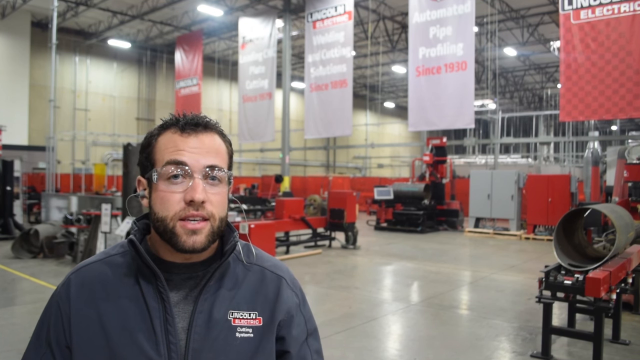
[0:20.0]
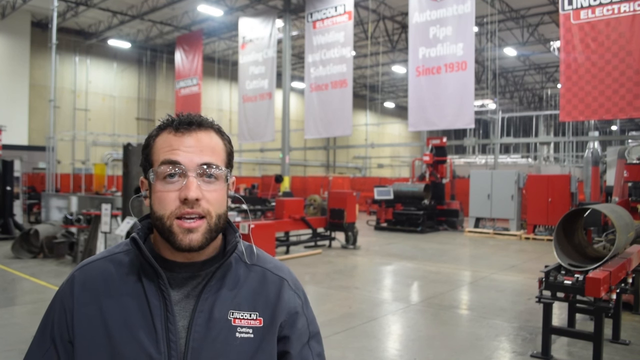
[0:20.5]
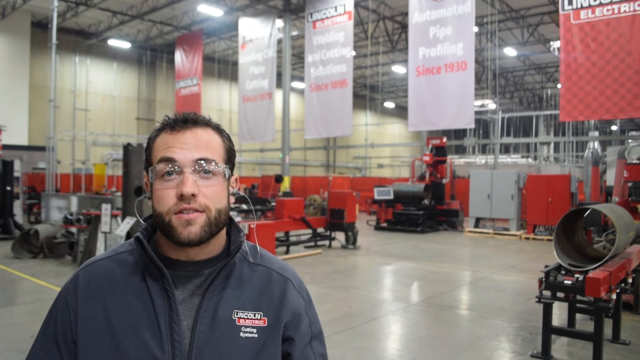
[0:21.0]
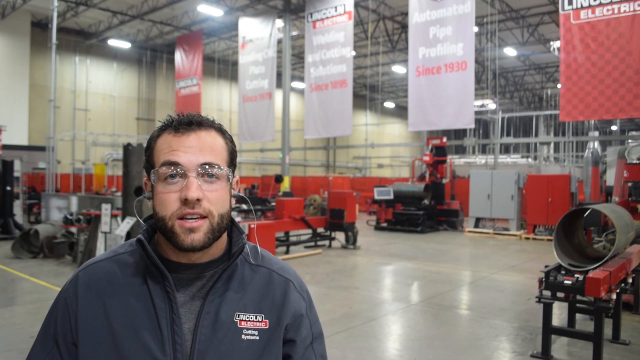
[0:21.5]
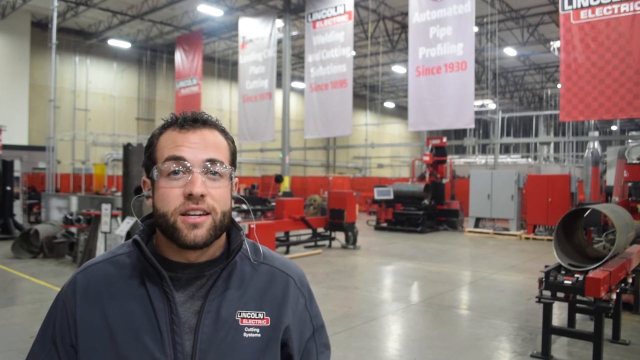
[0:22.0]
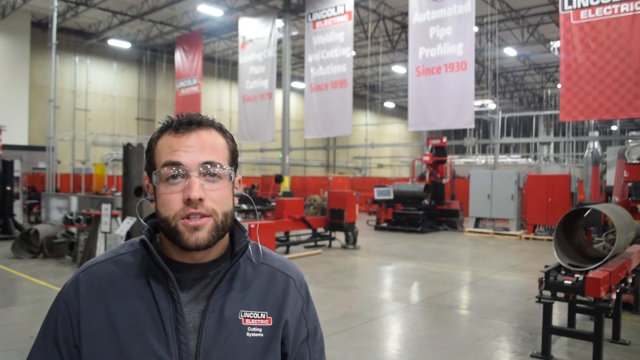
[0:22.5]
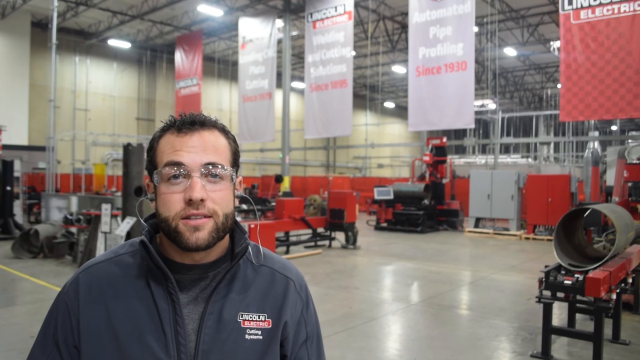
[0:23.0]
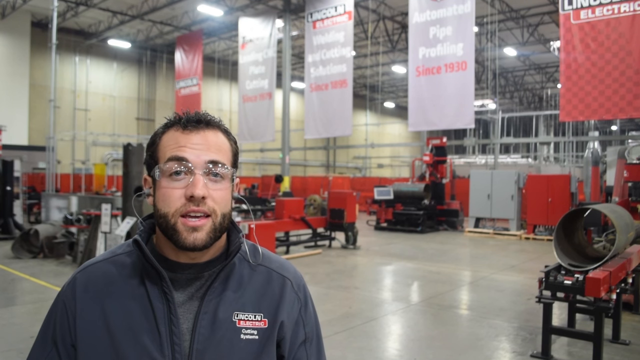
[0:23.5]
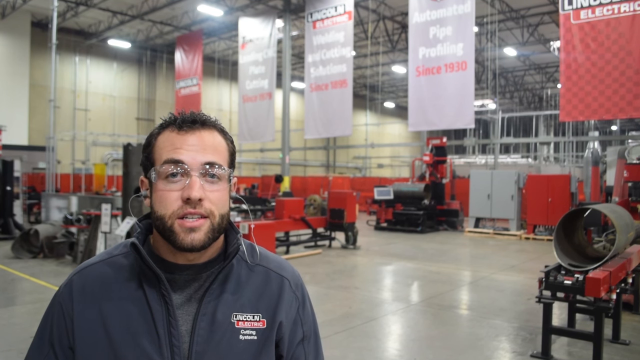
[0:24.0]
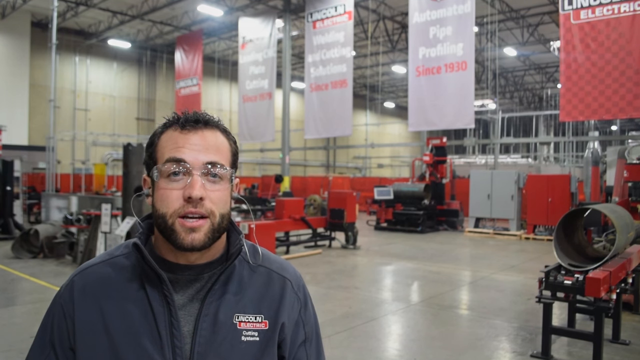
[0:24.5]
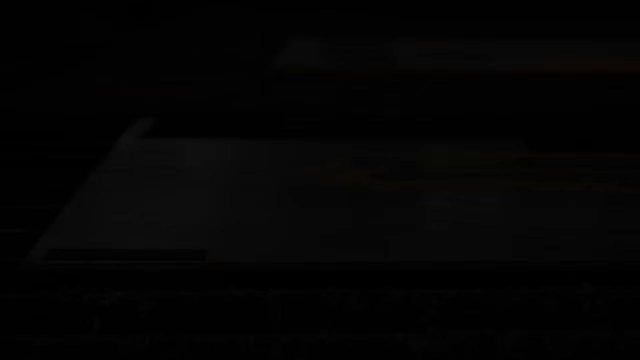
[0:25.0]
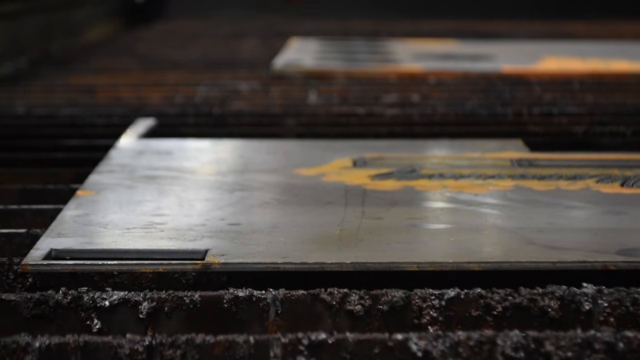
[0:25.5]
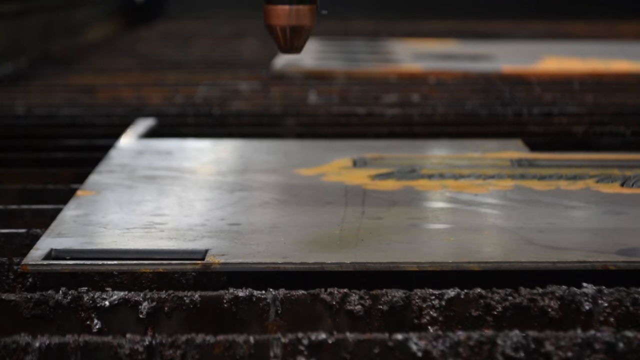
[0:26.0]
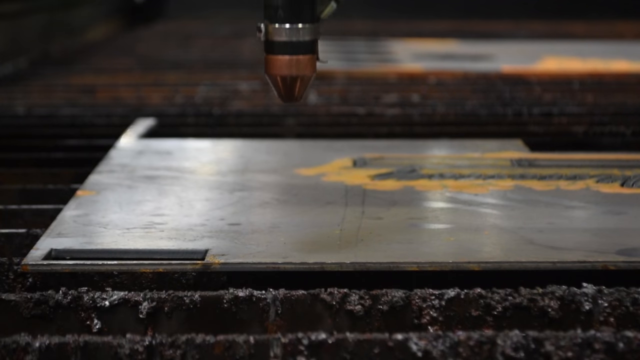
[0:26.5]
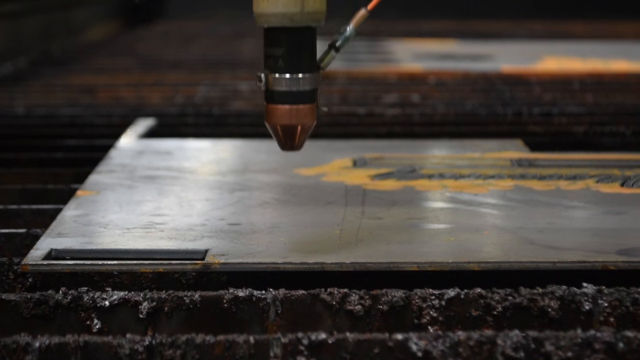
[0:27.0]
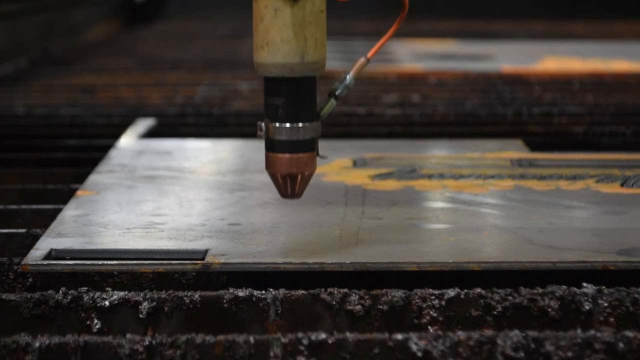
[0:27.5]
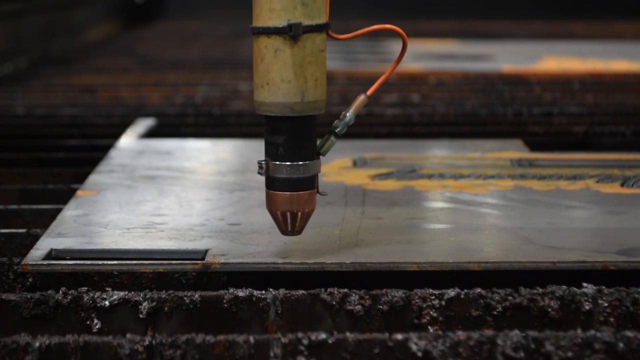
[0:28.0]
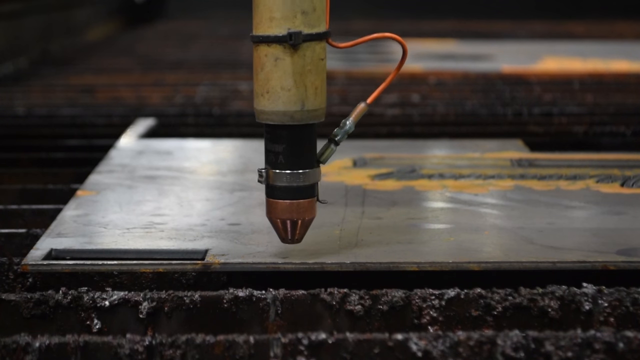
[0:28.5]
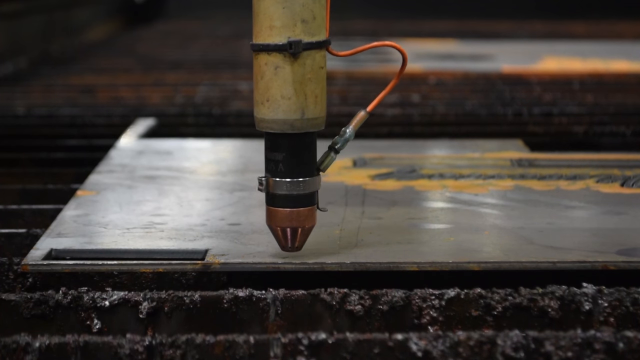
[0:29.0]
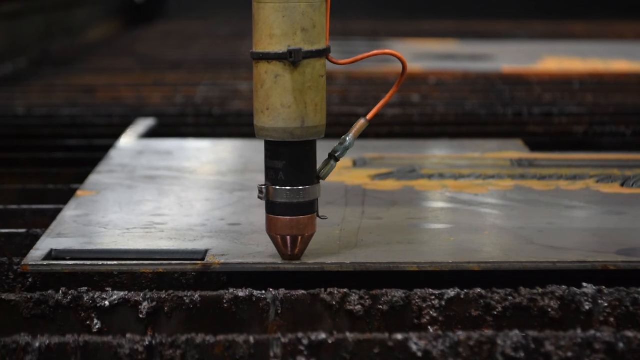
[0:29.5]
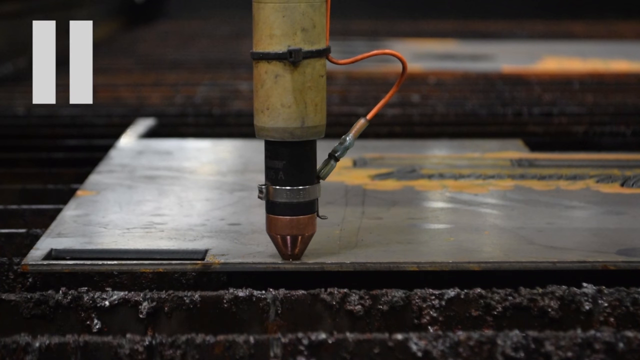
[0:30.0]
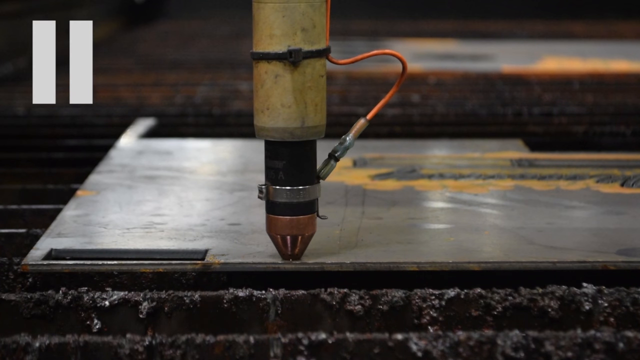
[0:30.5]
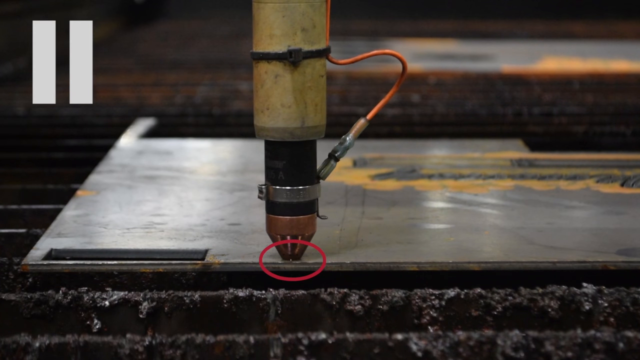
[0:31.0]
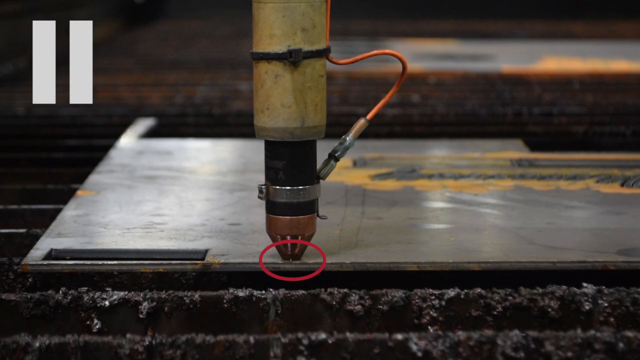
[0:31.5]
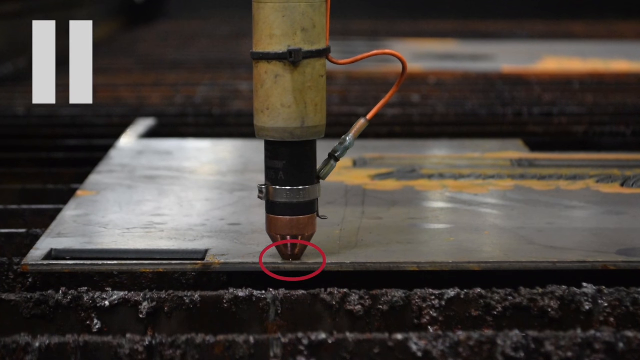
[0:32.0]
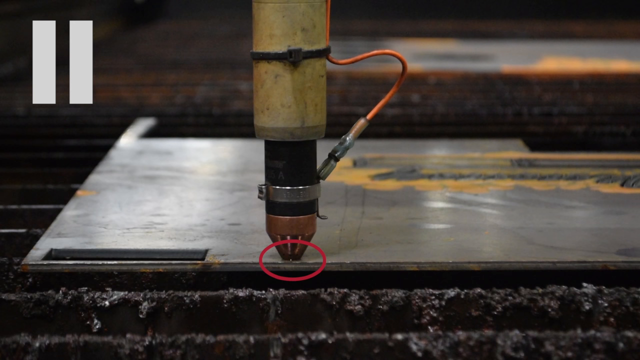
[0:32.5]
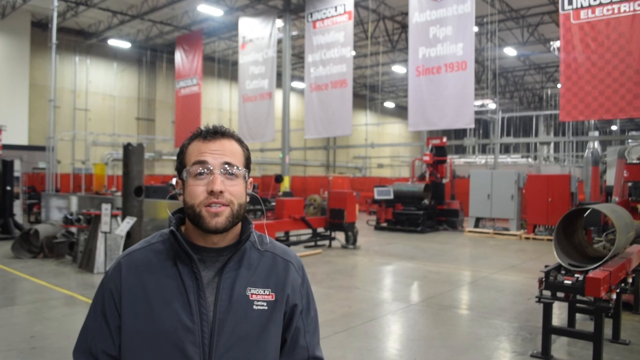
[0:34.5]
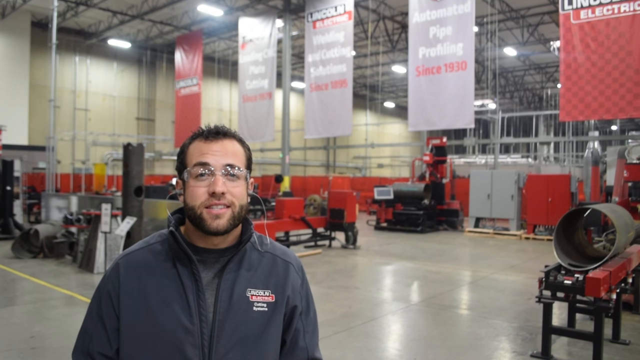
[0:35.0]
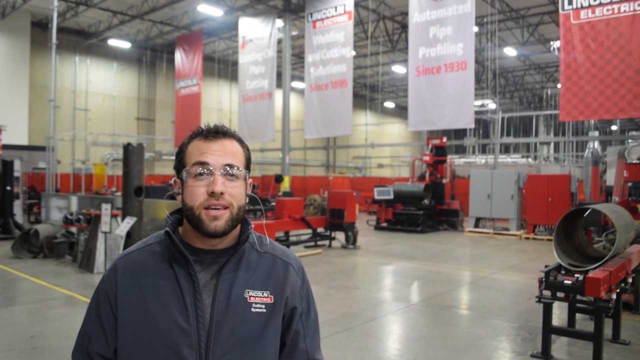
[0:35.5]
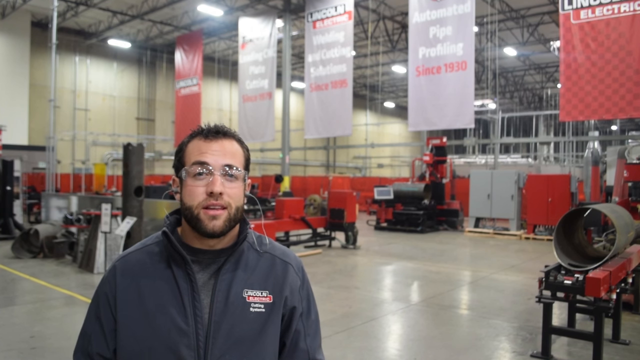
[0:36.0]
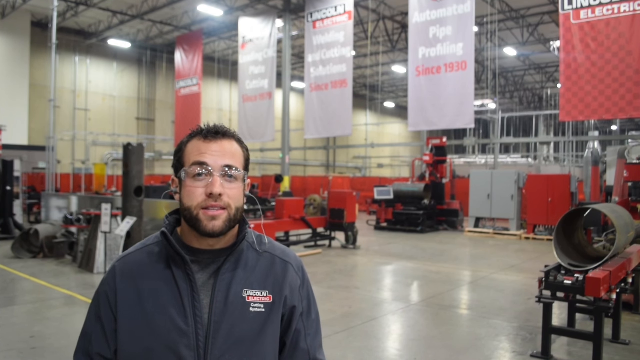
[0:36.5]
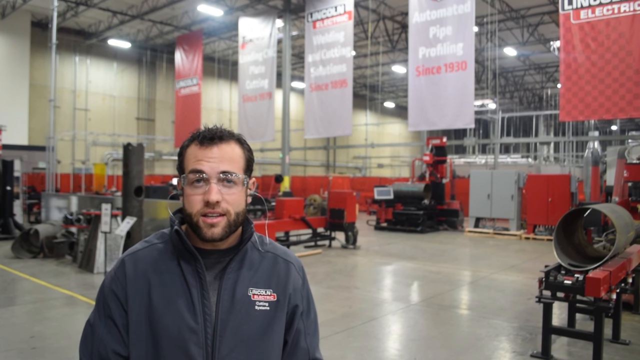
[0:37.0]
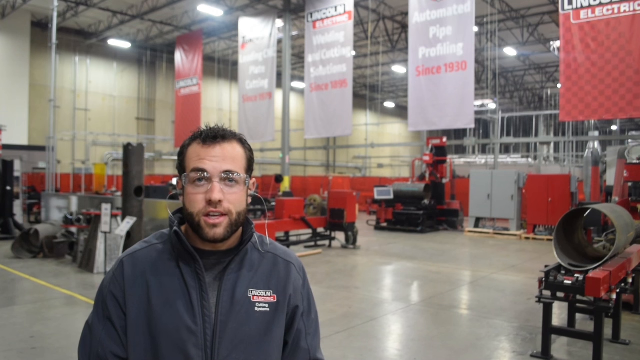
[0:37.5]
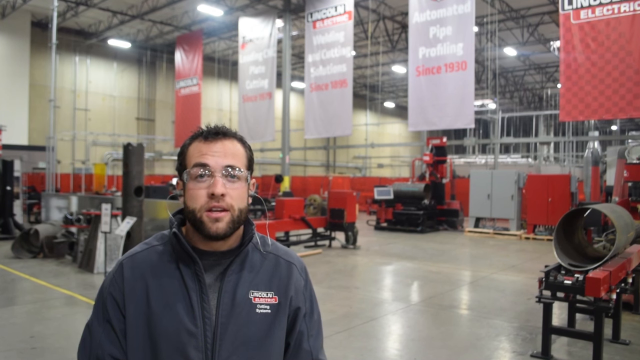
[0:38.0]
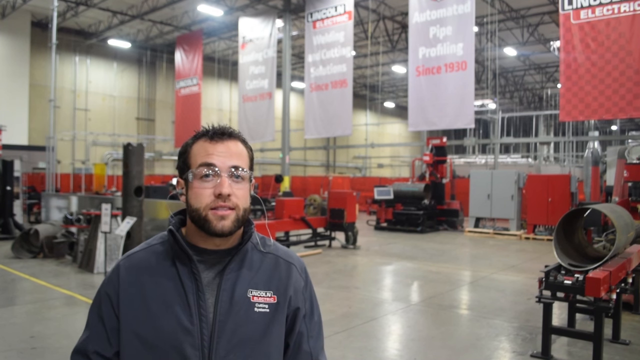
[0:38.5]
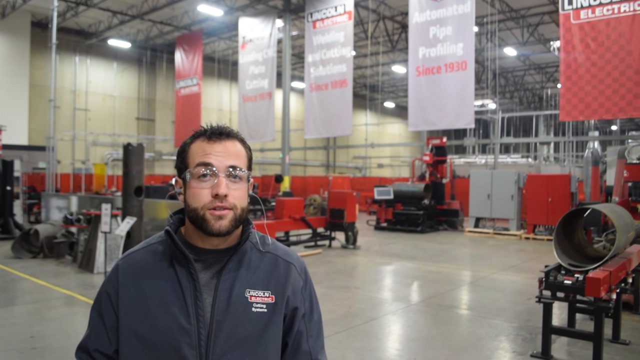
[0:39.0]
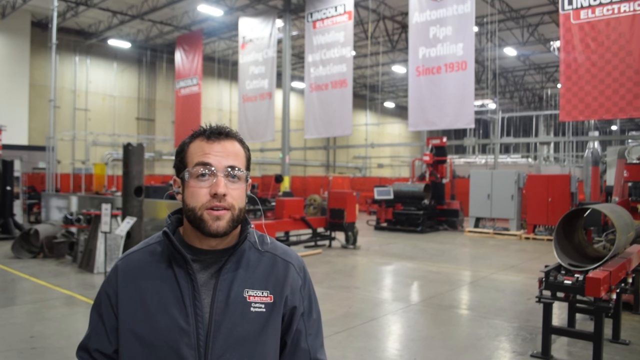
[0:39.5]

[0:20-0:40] Mark Humphries is talking. Behind him are five banners: the first is red and reads "Lincoln Electric"; the next is in what looks like a gray color; another reads "Lincoln Electric" and "since 1930"; the fourth reads "automated pipe profiling since 1930"; and another reads just "Lincoln Electric". A flat iron is on the floor, and a mounted machine is above it with a red circle at its mouth or tip. The iron comes down toward the flat iron on the floor.